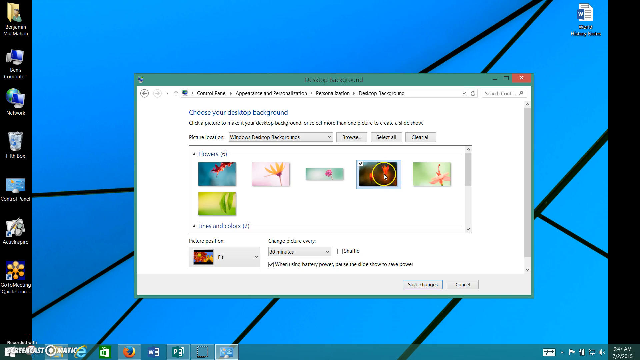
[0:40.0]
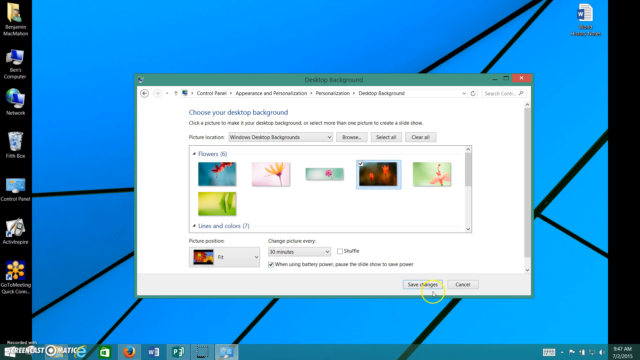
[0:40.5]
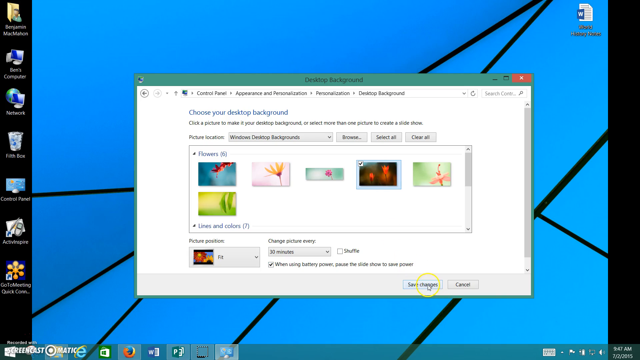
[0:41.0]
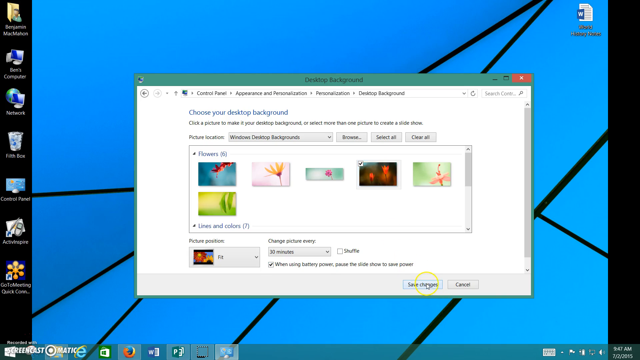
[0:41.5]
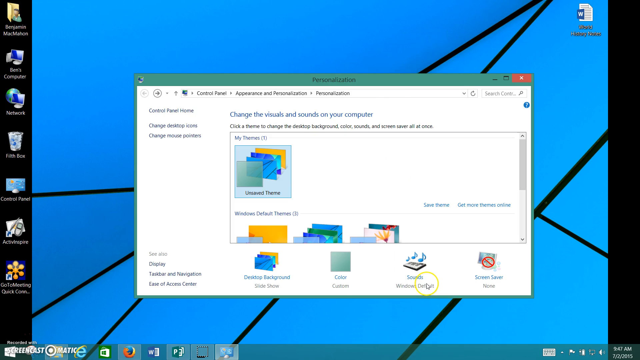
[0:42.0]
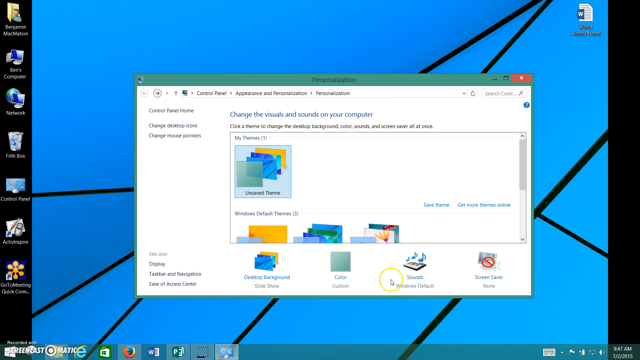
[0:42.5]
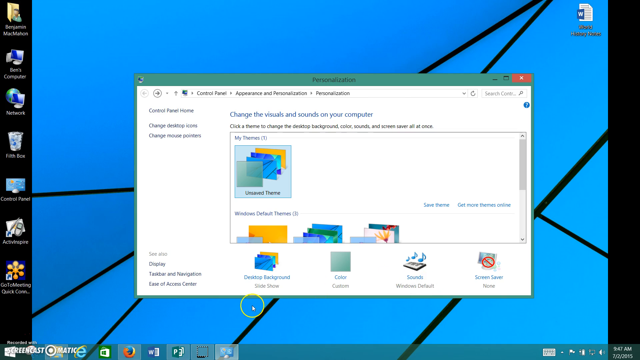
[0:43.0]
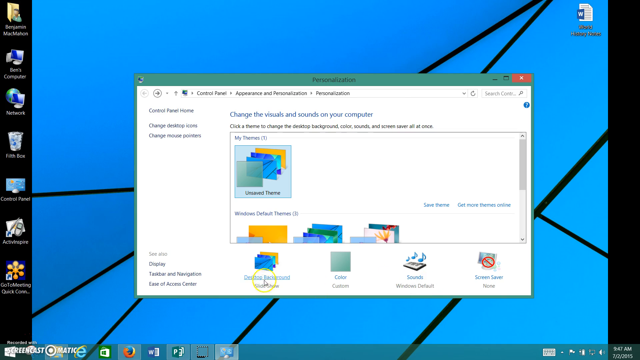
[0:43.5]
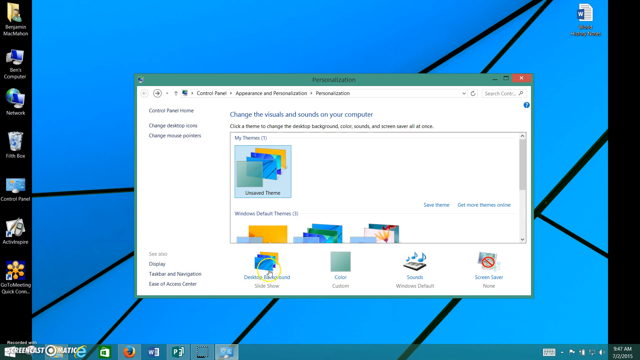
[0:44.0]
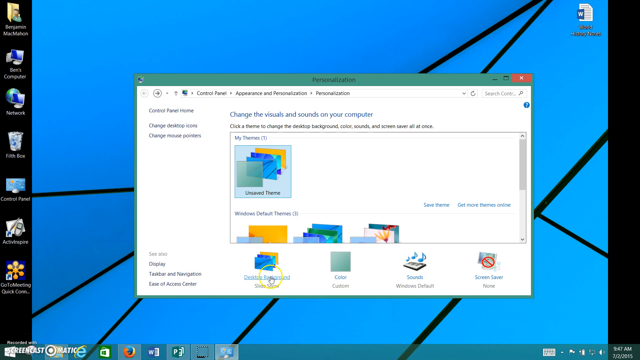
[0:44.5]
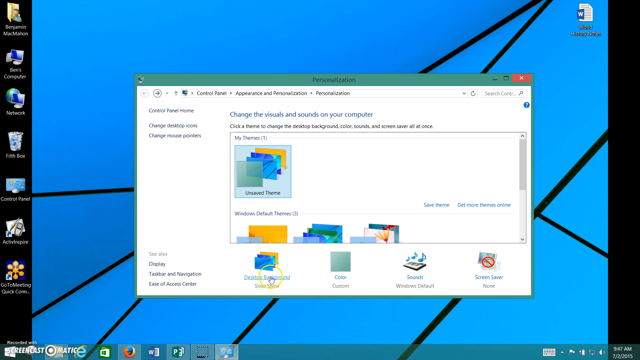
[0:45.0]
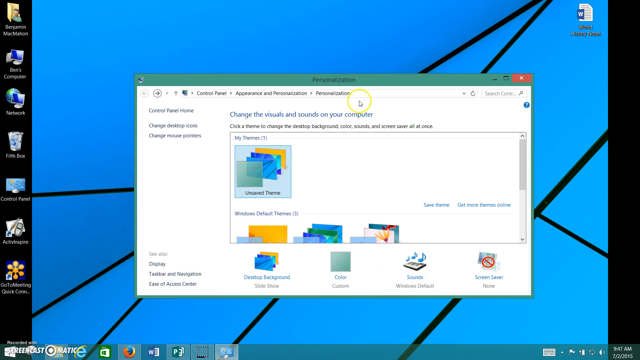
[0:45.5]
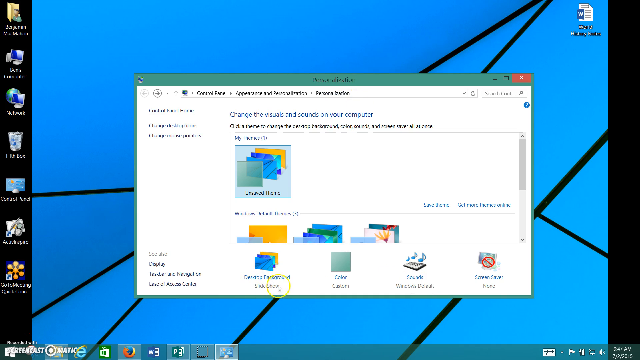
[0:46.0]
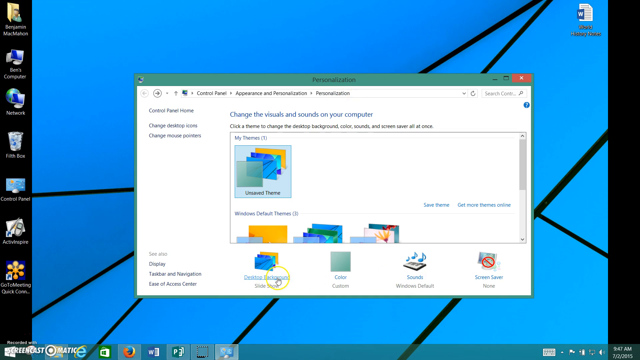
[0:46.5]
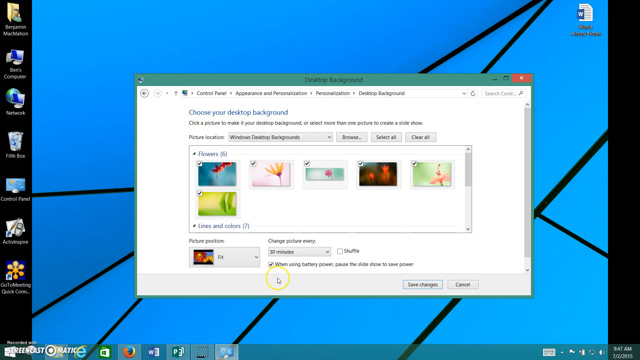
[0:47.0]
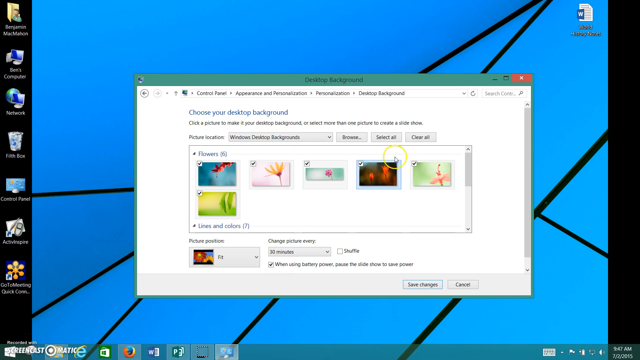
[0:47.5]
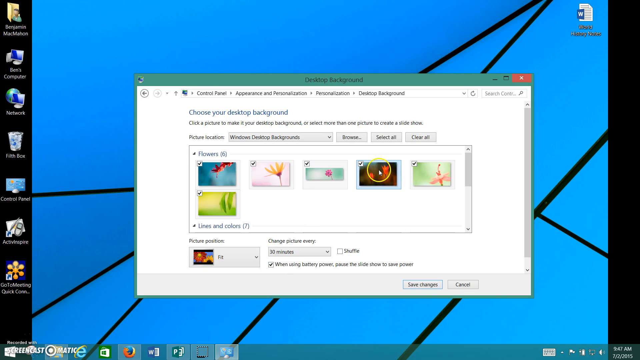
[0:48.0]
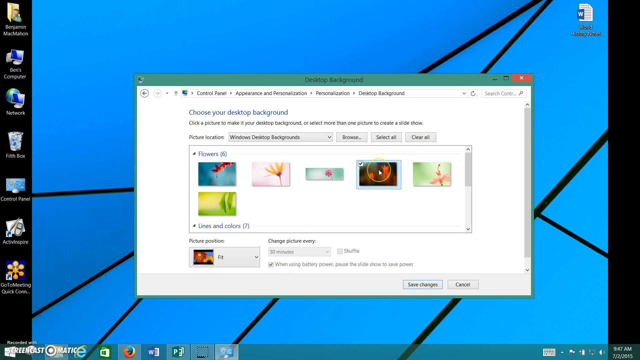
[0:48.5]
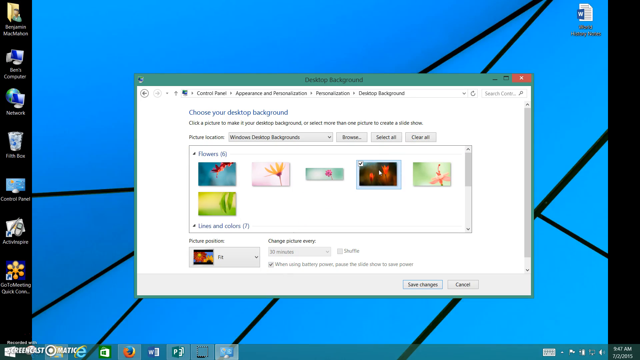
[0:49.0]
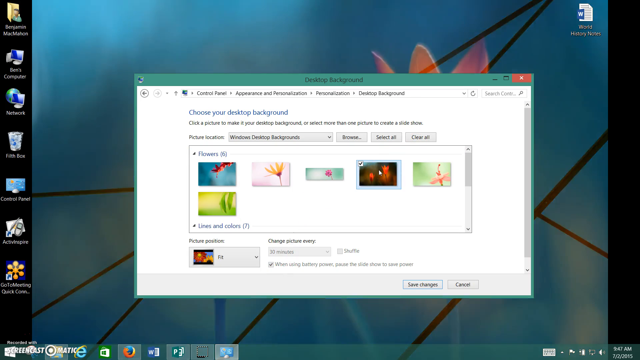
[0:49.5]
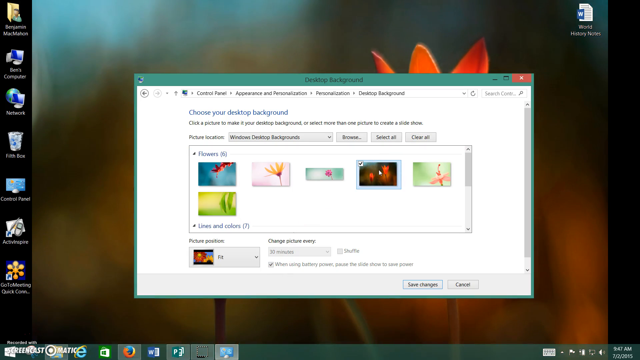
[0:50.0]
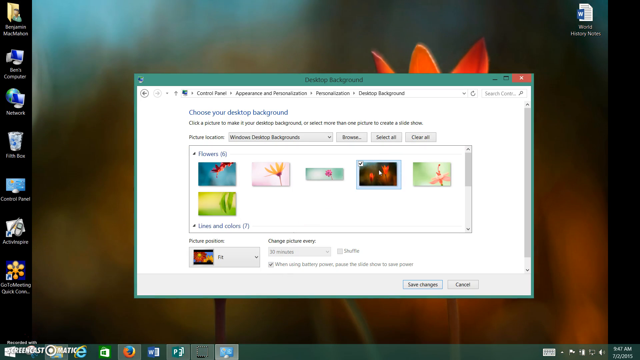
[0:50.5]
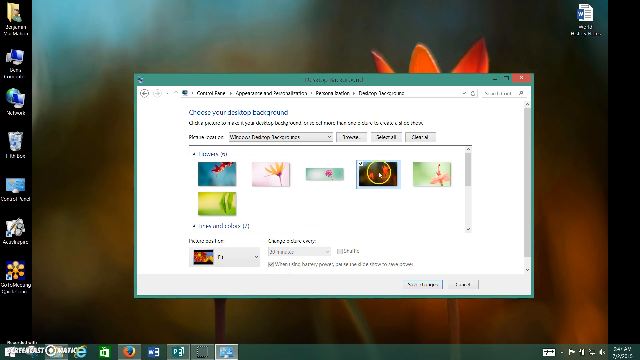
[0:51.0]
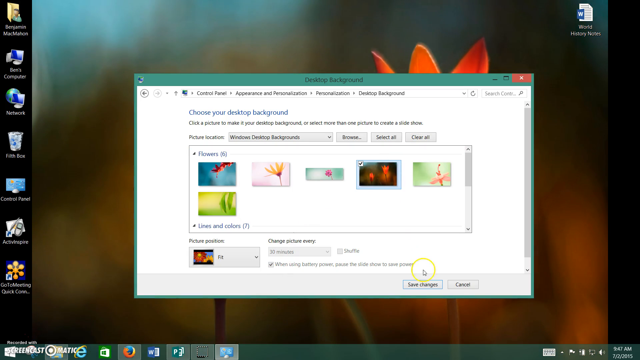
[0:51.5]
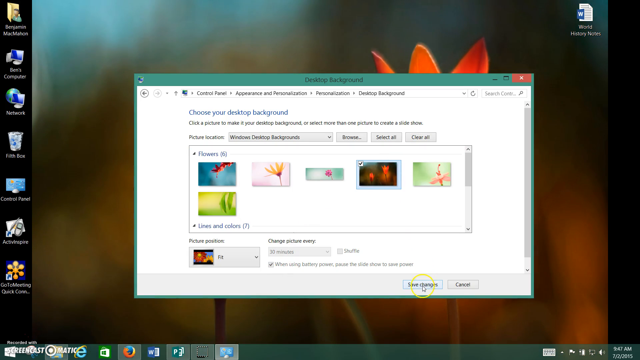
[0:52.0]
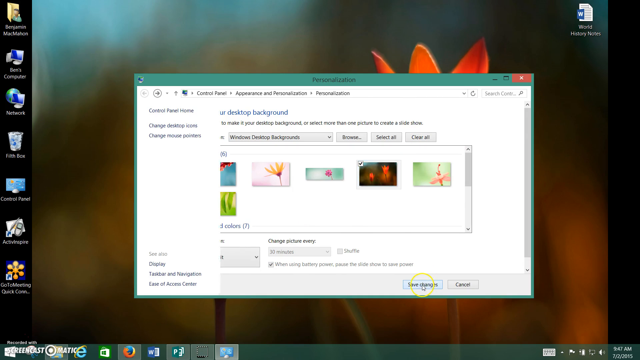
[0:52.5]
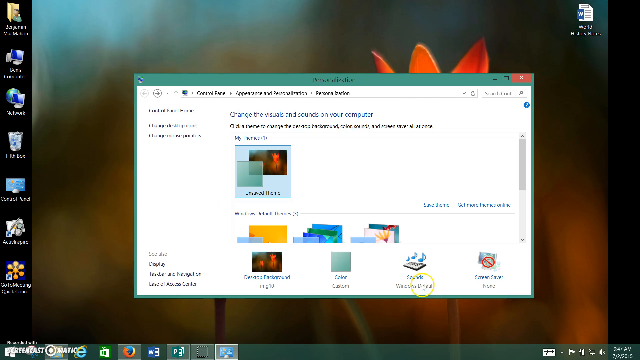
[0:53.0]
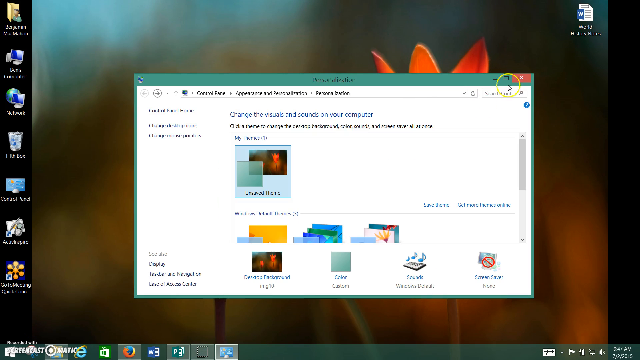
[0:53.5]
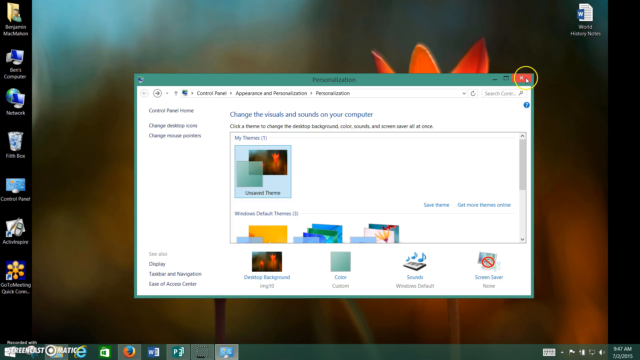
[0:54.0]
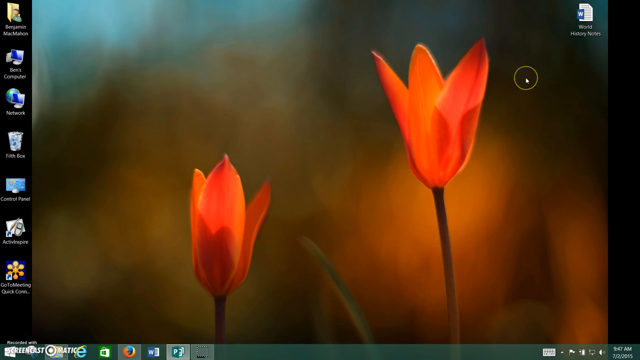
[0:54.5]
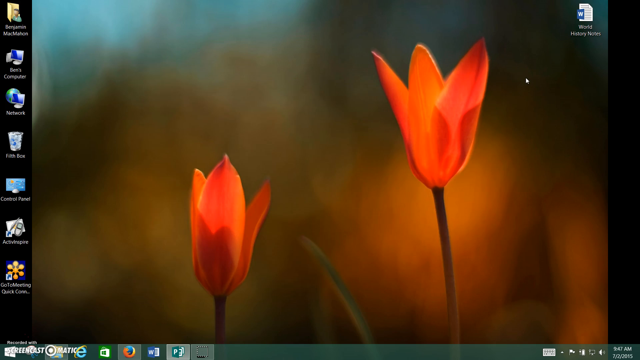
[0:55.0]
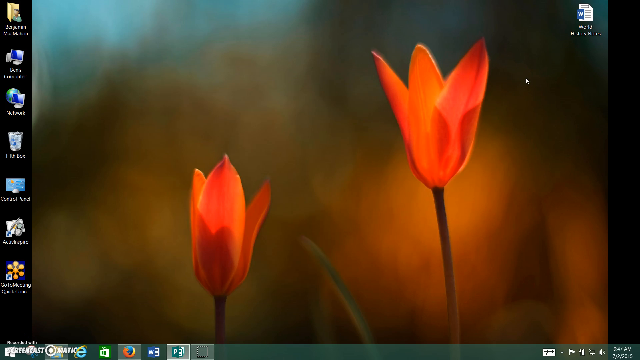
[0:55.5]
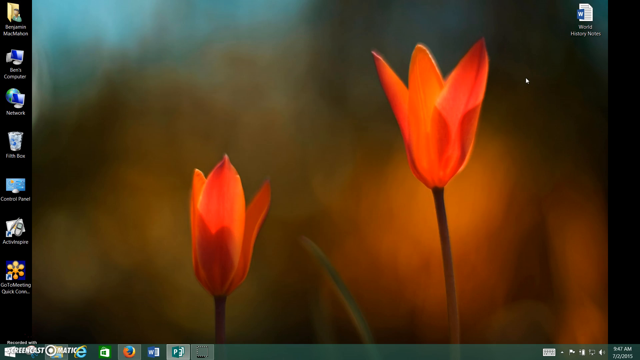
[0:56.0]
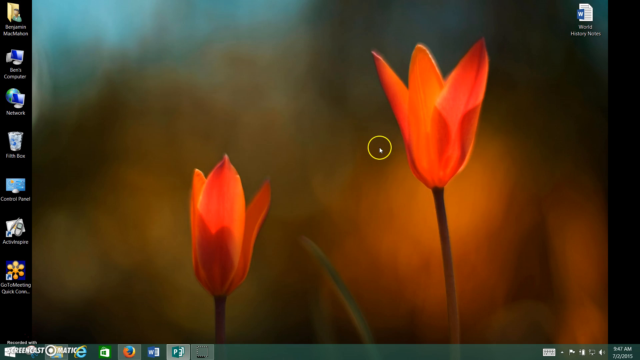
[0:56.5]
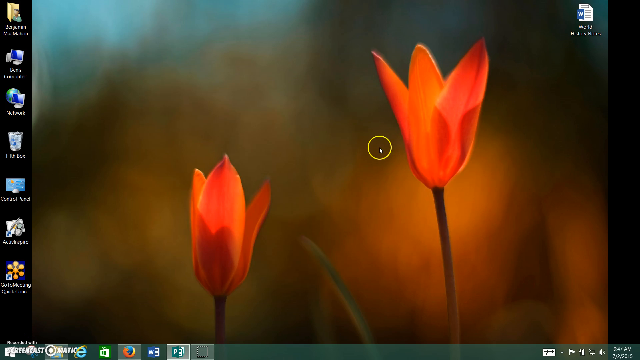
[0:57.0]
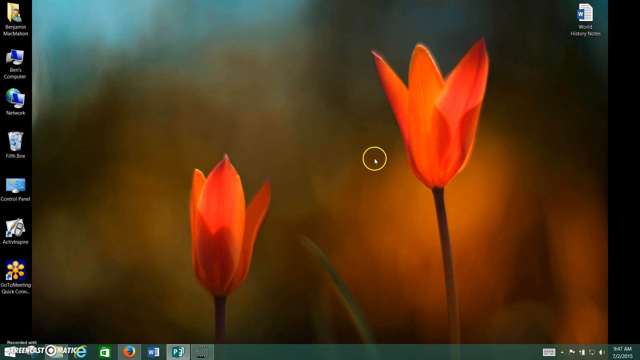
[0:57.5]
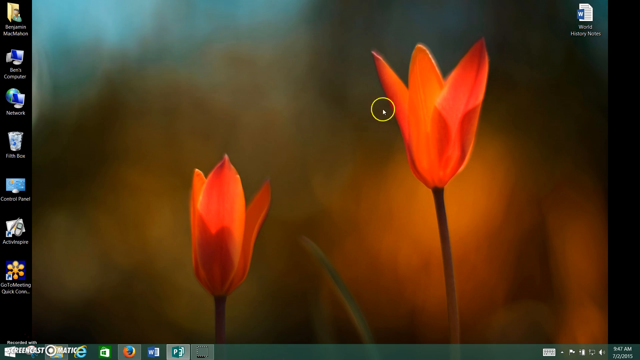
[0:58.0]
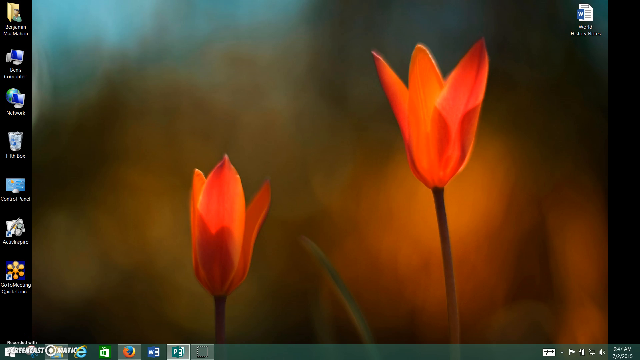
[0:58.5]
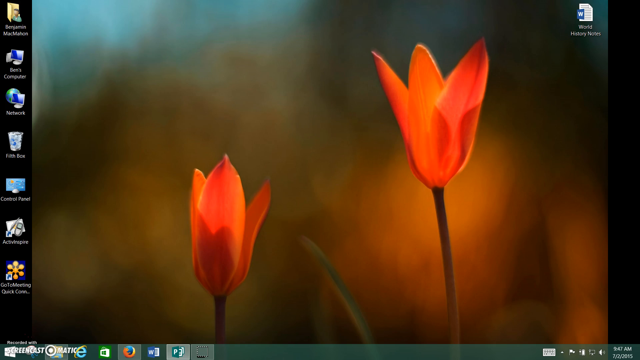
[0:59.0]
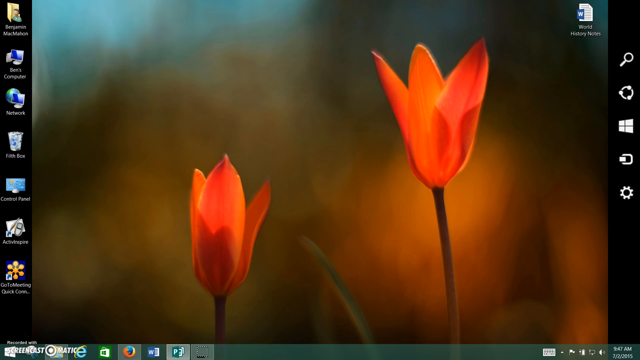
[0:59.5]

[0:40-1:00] The Windows desktop shows a blue background with black lines intersecting across it. On the left side of the screen are the My Computer, Network, Recycle Bin and Control Panel icons, and a Word document is in the top right corner. The Desktop Background dialog window from the Personalization options is open, telling the user to choose their desktop background. The picture location is set to Windows Desktop Backgrounds, showing a number of default images, and the user has clicked an image of two red flowers on a dark background. The user goes back to the main personalization section and clicks desktop background once again. At the bottom, they click an option about changing the picture every 30 minutes and about battery power and saving power. They click on multiple images and save the changes. The desktop updates to show the two red flowers and is set to change to a different background from the same folder every 30 minutes.